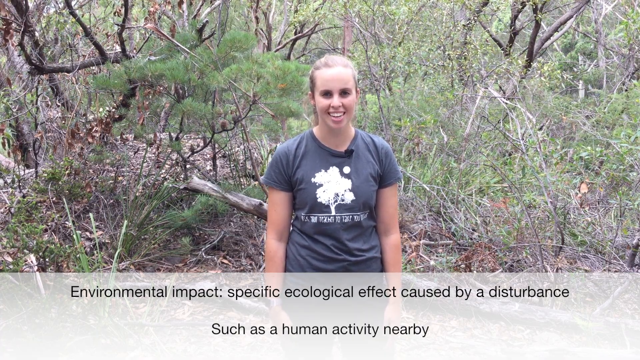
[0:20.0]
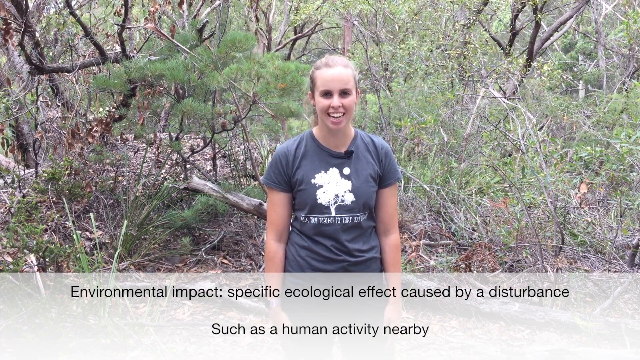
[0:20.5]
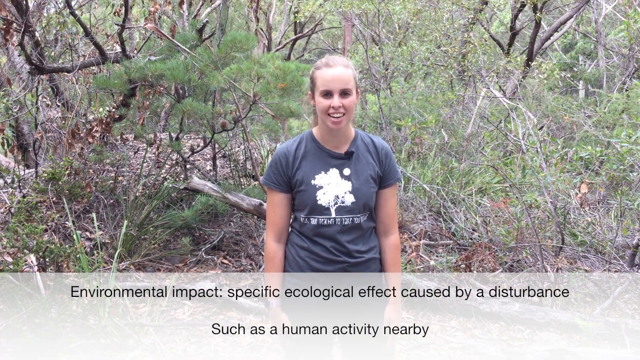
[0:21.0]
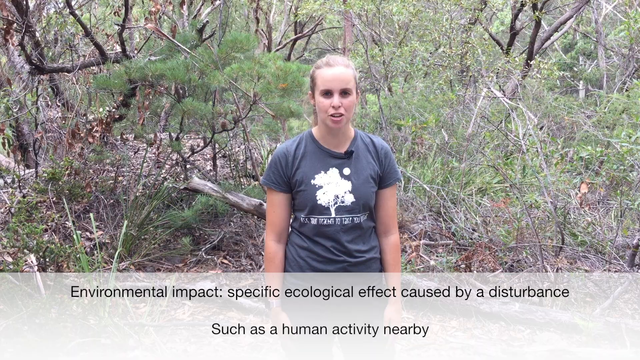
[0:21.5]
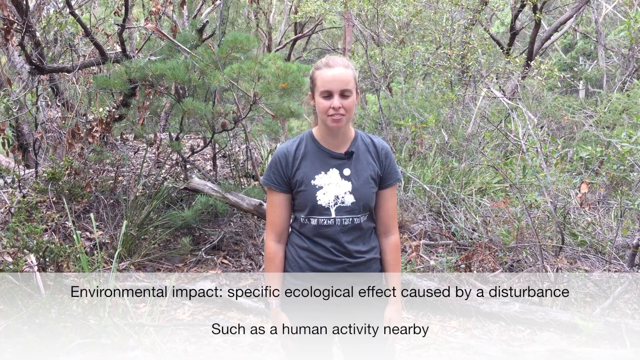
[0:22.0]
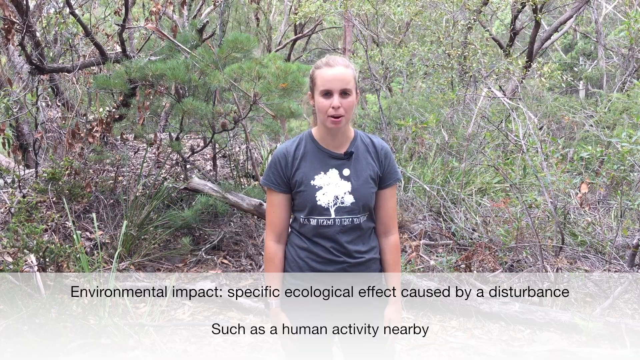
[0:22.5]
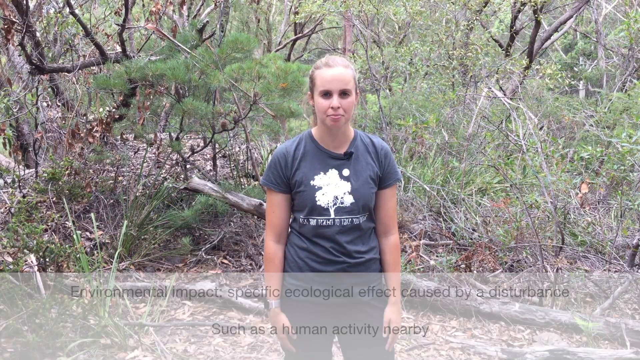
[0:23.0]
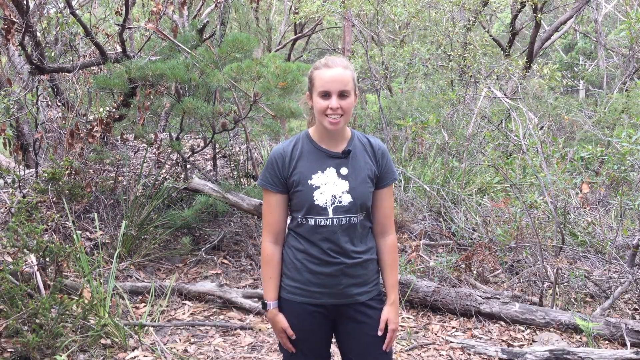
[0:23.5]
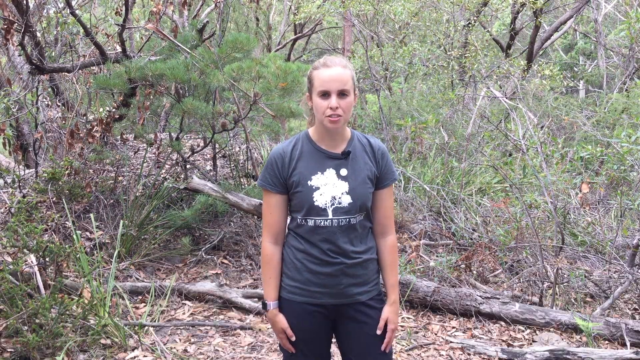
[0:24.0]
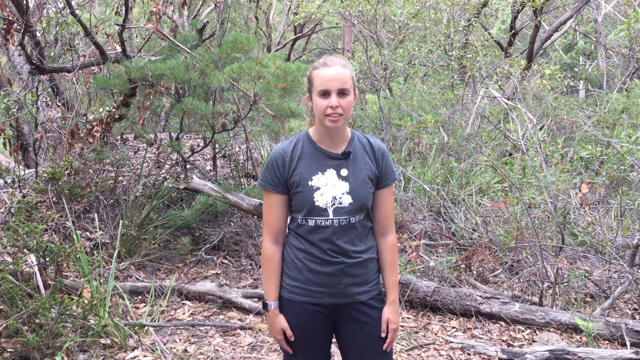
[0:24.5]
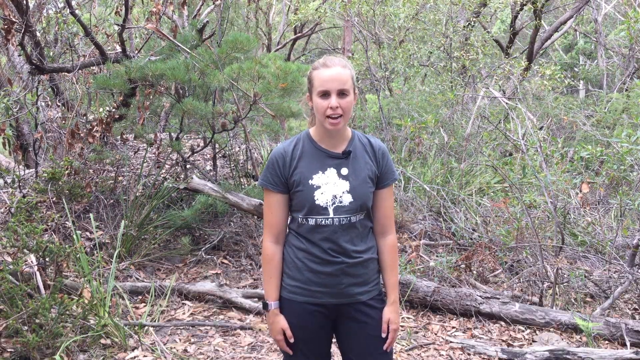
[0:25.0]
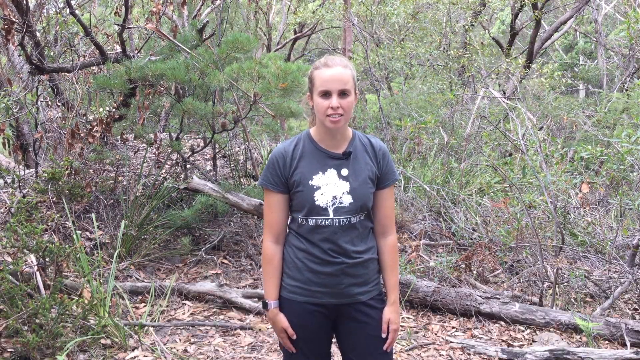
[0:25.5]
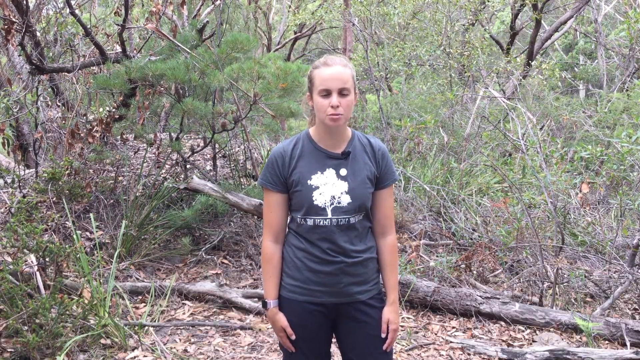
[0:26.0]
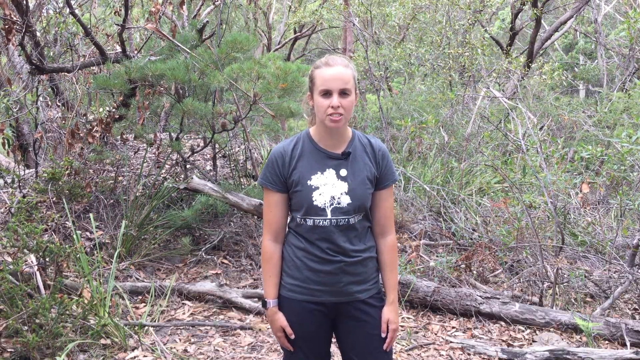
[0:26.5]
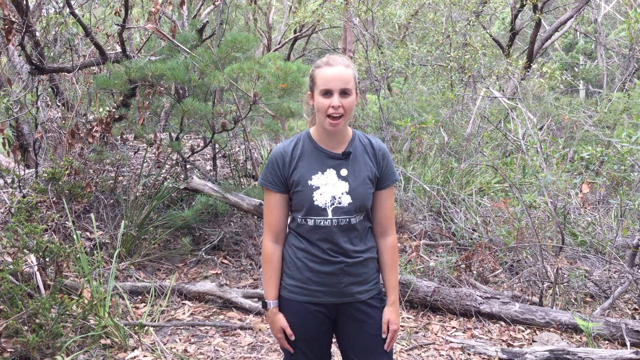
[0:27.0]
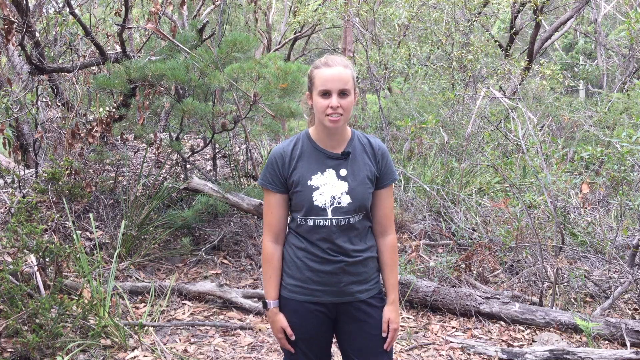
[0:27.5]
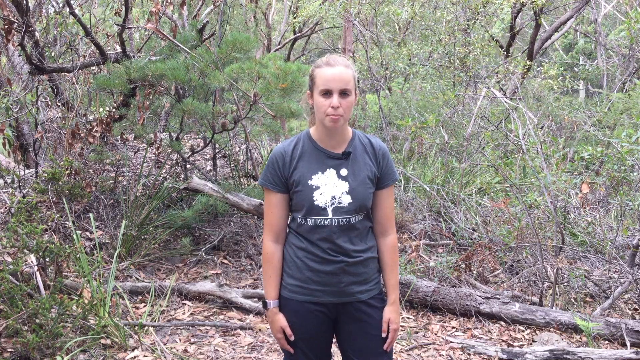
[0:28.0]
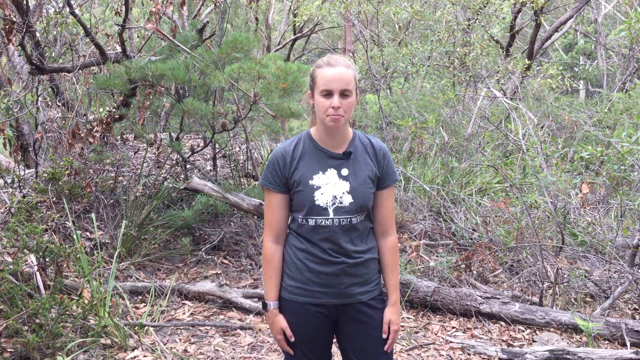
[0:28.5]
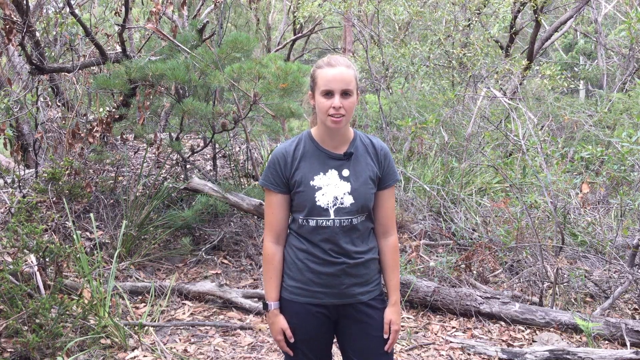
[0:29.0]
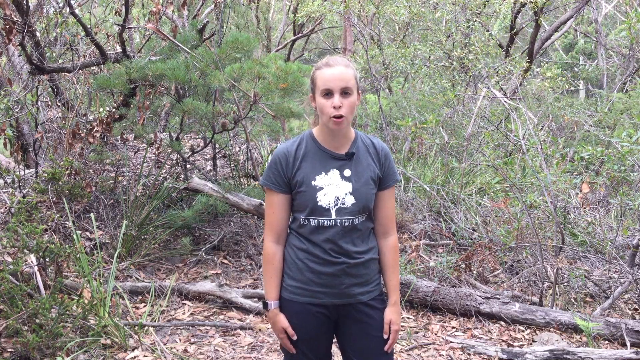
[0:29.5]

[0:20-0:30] The woman talks to the camera in the same wooded area. A caption appears on the screen reading "Environmental impact specific ecological effect caused by a disturbance" and then disappears. Some of the trees in the background possibly have brown leaves. There is a slogan on the woman's T-shirt, but it is too blurry and small to read.